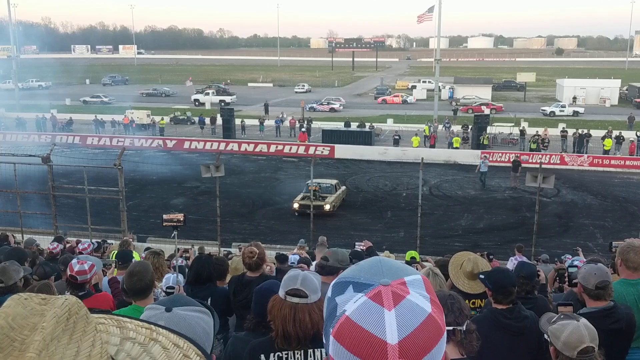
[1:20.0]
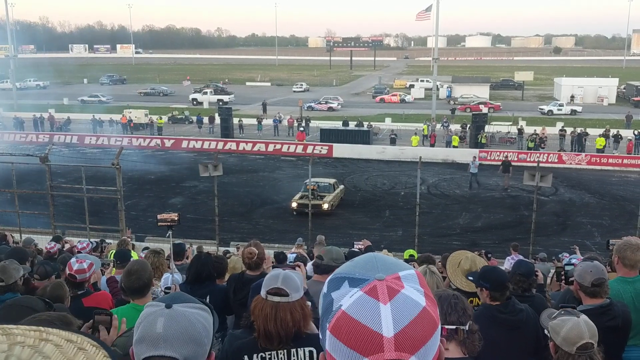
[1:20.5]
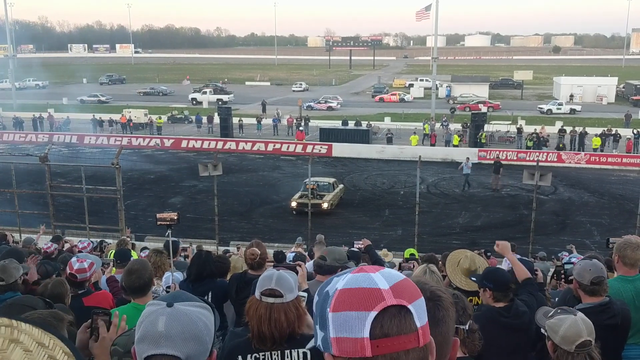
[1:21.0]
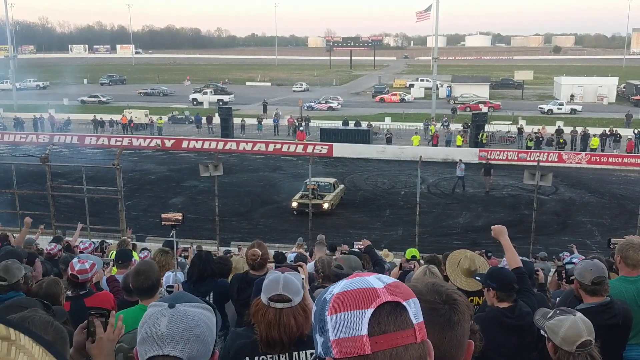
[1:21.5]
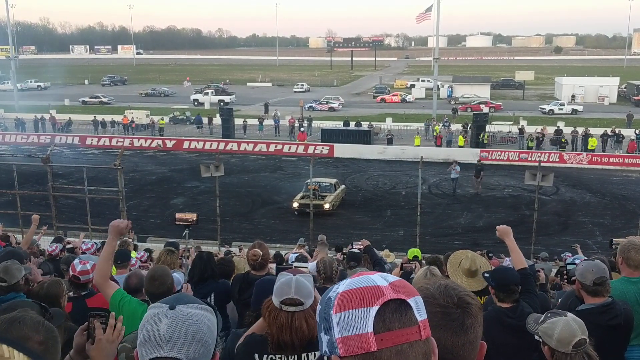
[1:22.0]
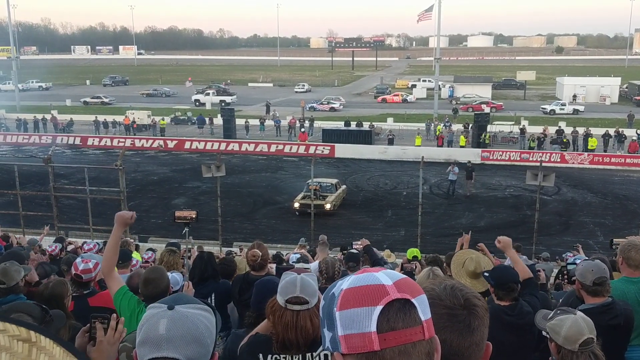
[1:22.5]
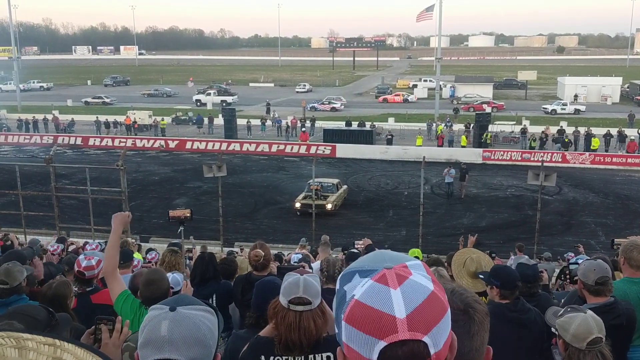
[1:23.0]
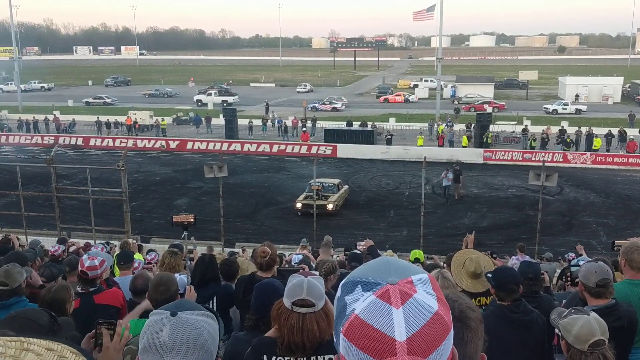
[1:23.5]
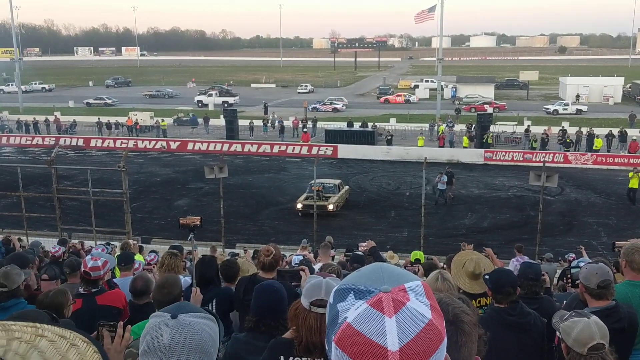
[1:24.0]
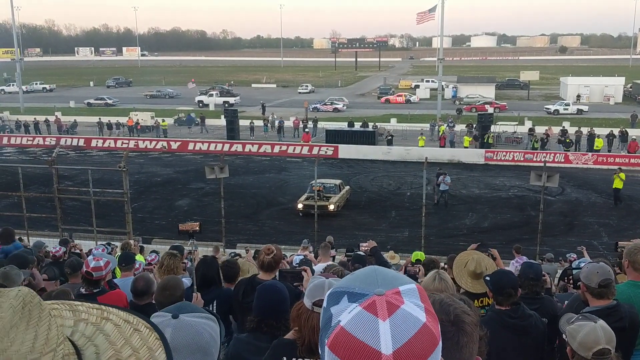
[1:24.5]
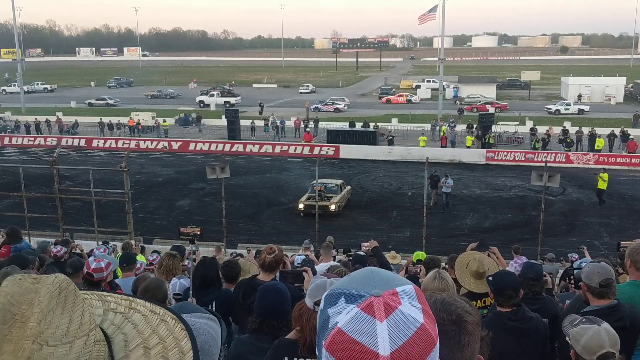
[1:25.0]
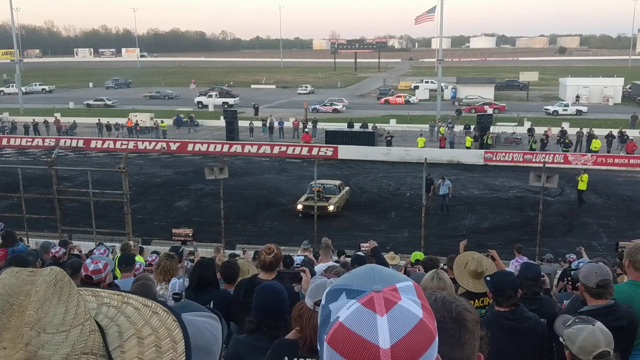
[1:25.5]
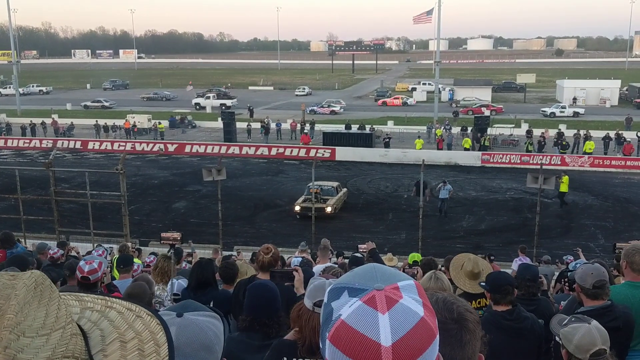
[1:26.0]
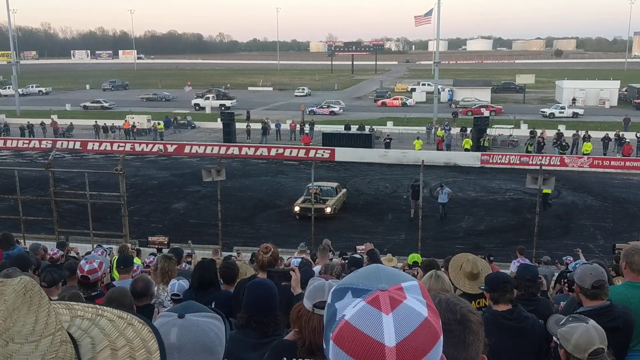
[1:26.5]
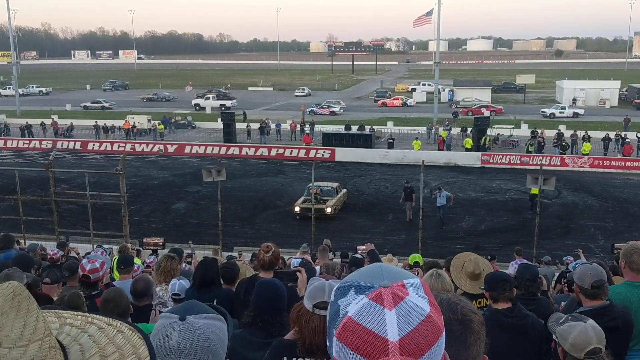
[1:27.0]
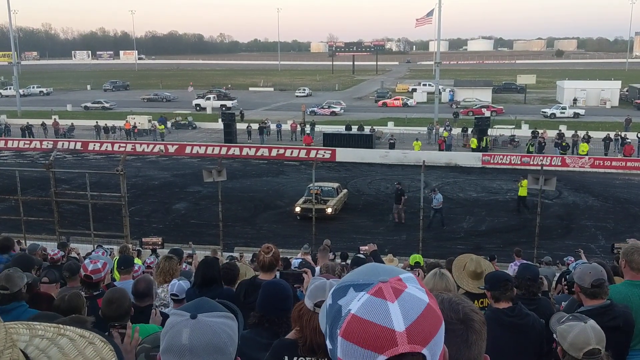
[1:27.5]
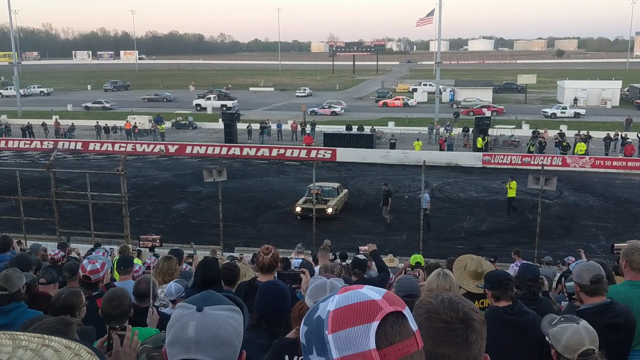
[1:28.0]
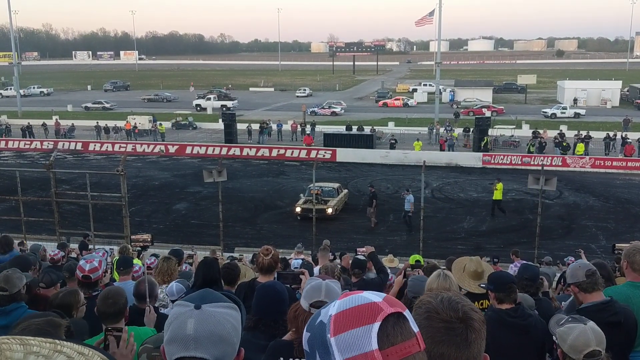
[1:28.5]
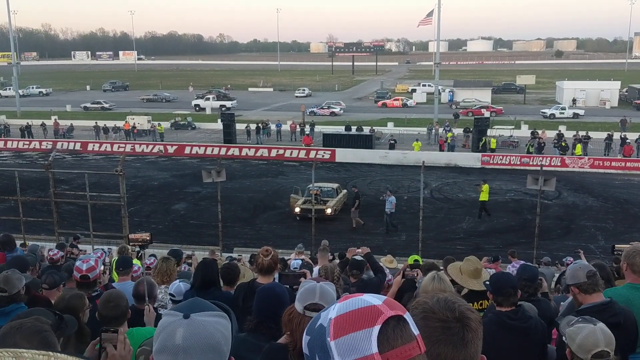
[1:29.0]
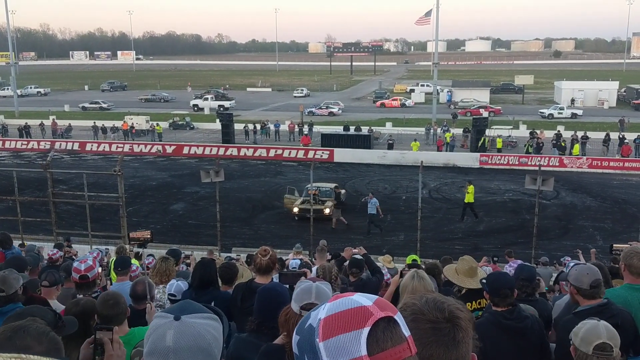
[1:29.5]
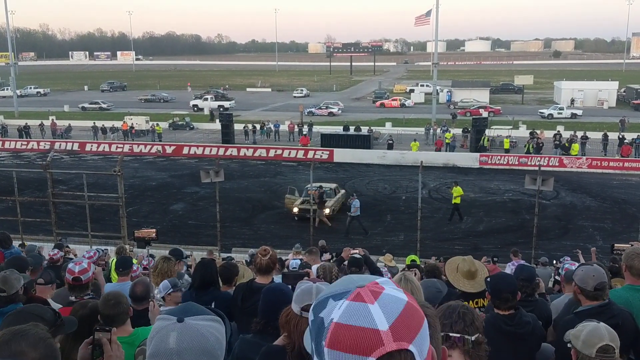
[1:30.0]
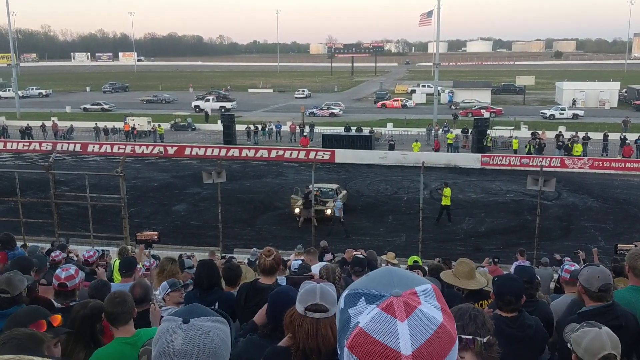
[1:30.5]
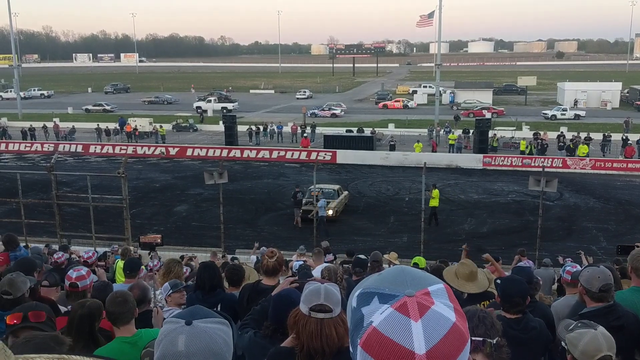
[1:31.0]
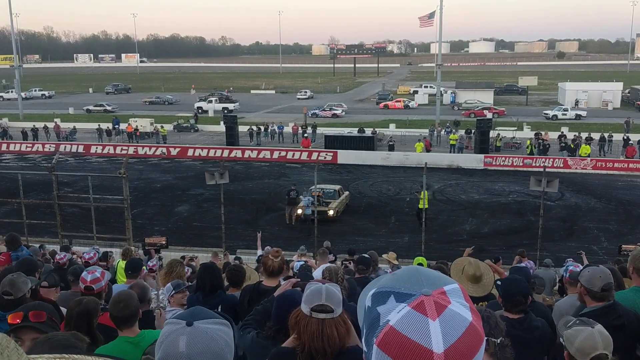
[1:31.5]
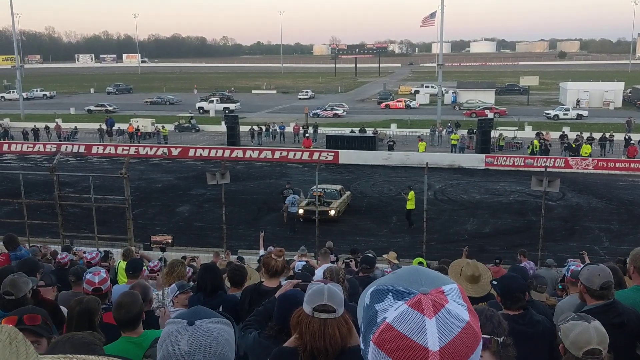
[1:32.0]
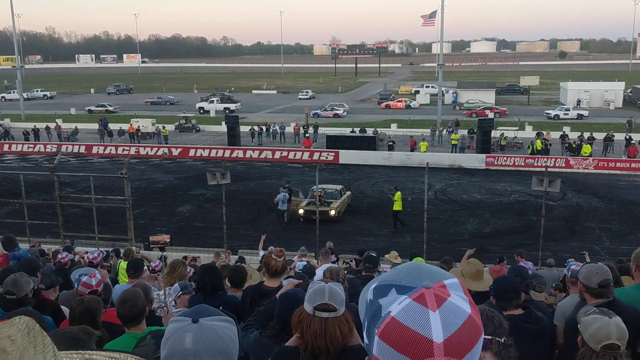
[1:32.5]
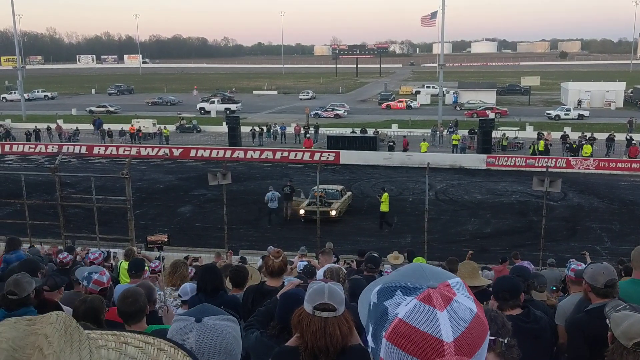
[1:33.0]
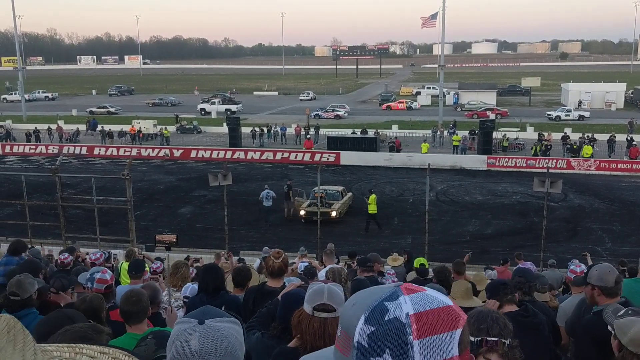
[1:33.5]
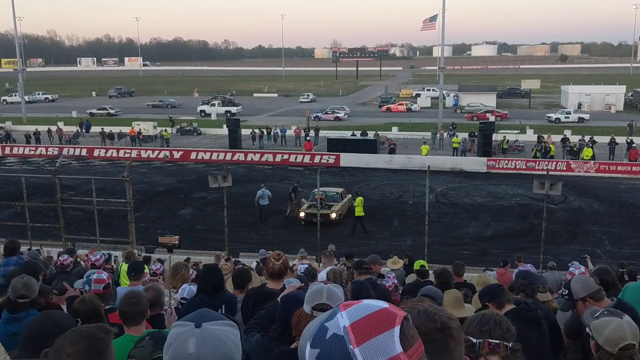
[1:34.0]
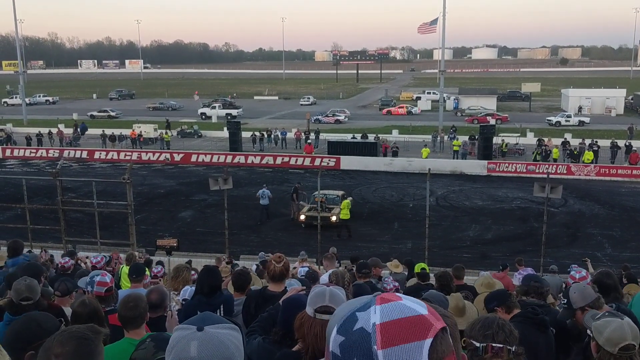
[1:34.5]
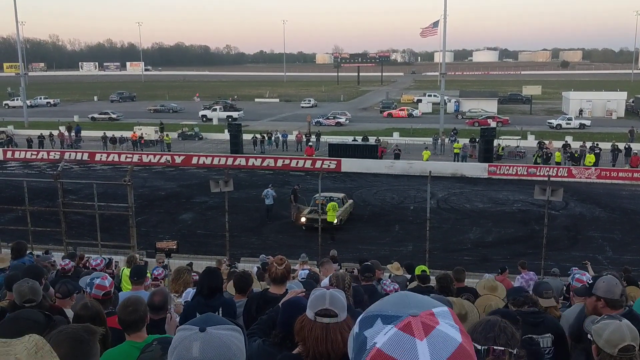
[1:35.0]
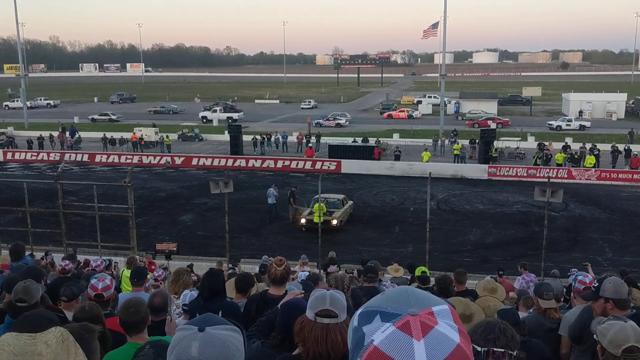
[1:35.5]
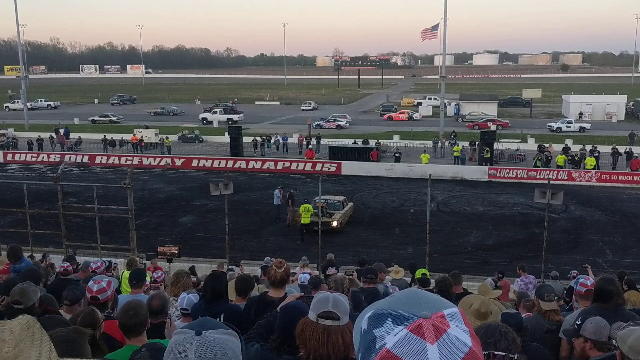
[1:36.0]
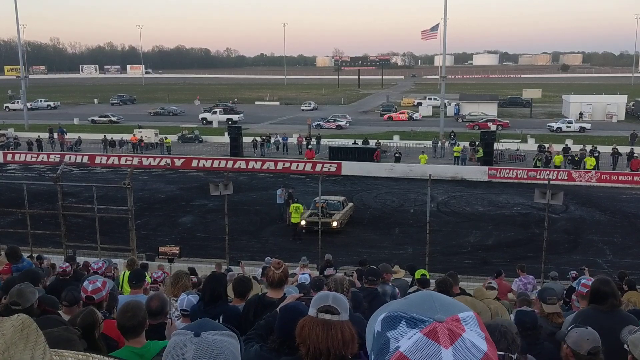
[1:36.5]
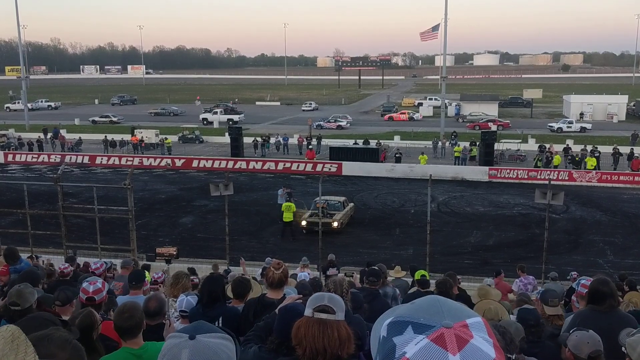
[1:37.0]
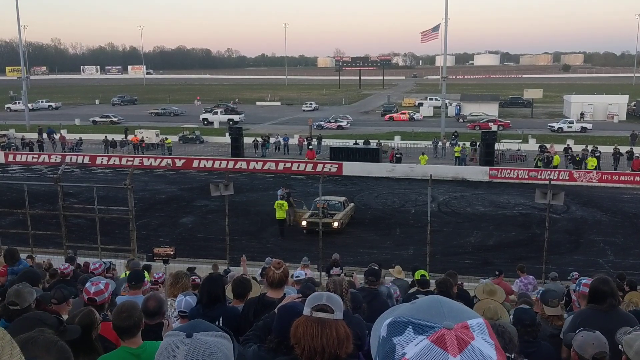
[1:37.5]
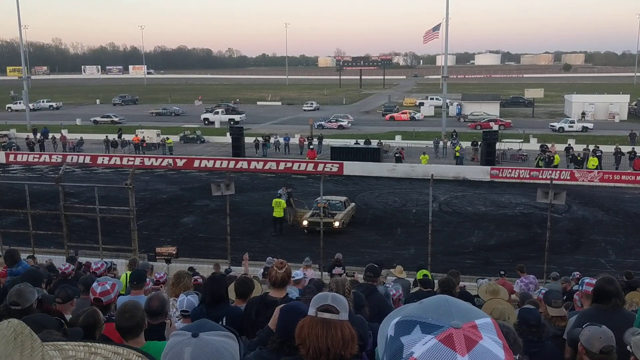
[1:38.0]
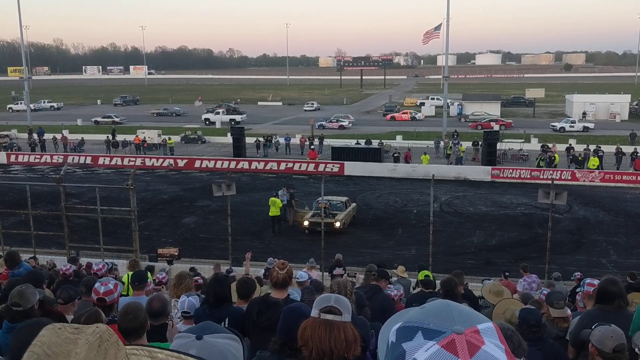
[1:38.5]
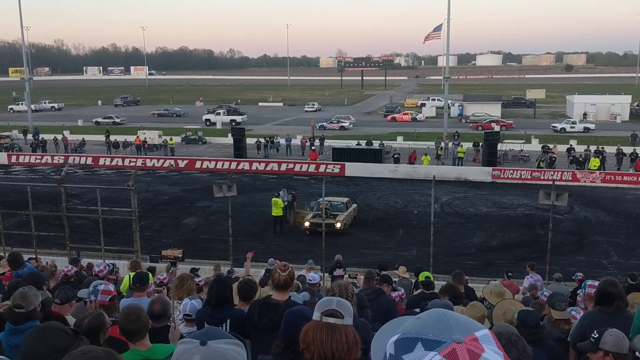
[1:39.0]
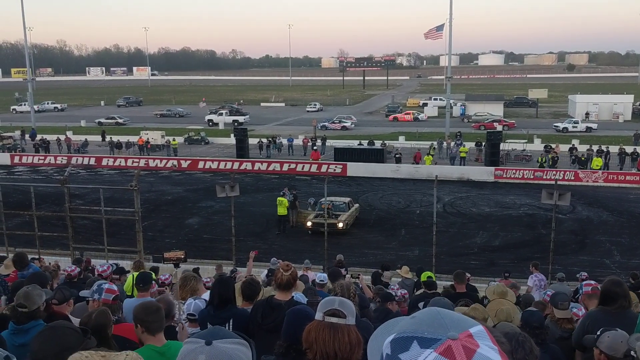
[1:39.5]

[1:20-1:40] The racetrack for car racing is shown, with a significant area for fans around it. Many of the fans are recording the events on the racetrack with their mobile phones. The event appears to be taking place in the United States of America, as a USA flag is posted on one of the pillars. The skies are clear and the sky is red, suggesting it is perhaps evening. At the start, the yellow car is spinning round in circles, releasing a lot of fumes from its exhaust pipe. It finally comes to a halt, and as it does, many of the fans raise their hands in celebration. A number of individuals then walk towards the car, open the door and wait for the driver to come out. Eventually he comes out: a man wearing a black shirt.